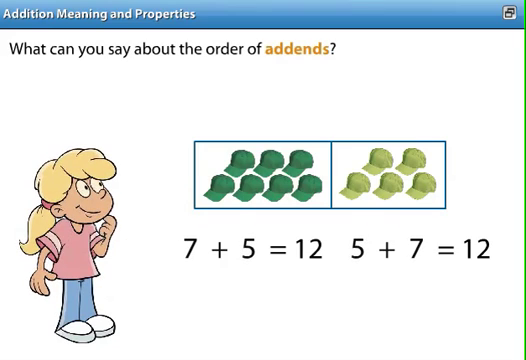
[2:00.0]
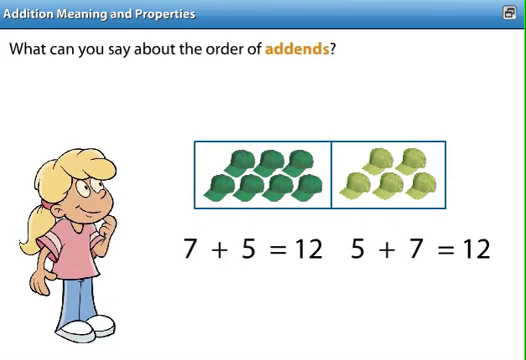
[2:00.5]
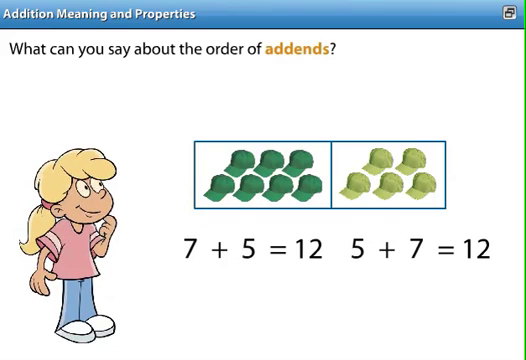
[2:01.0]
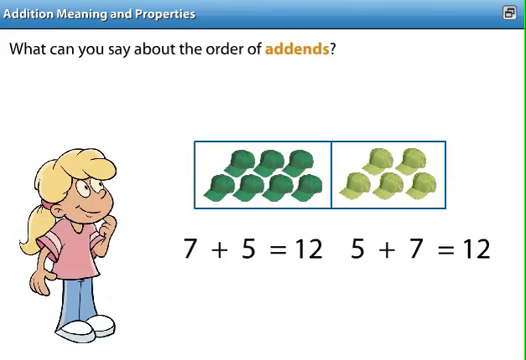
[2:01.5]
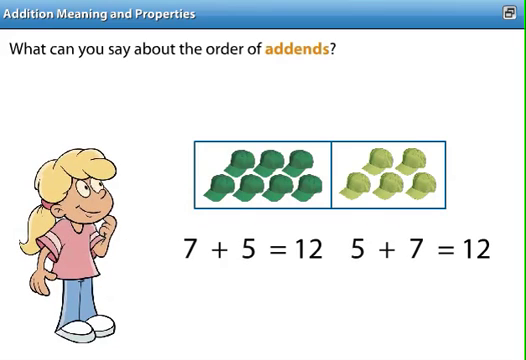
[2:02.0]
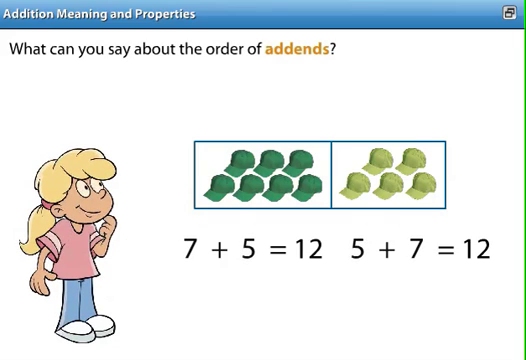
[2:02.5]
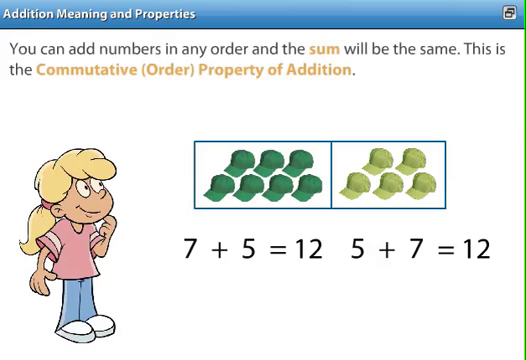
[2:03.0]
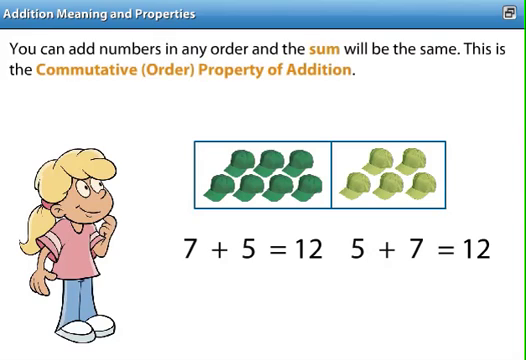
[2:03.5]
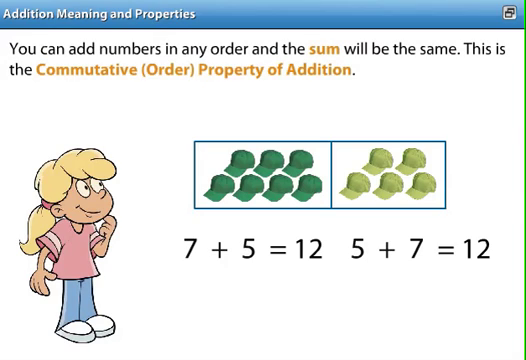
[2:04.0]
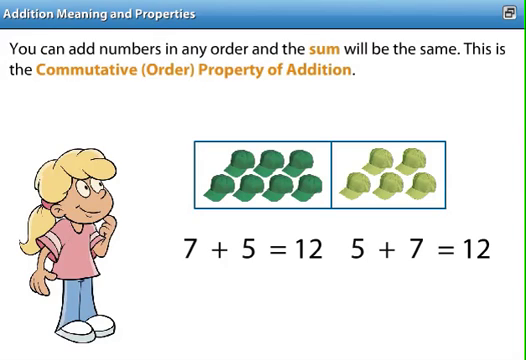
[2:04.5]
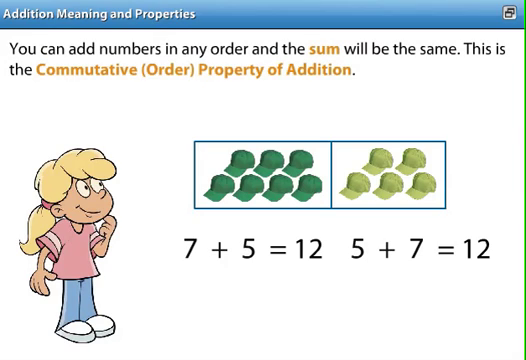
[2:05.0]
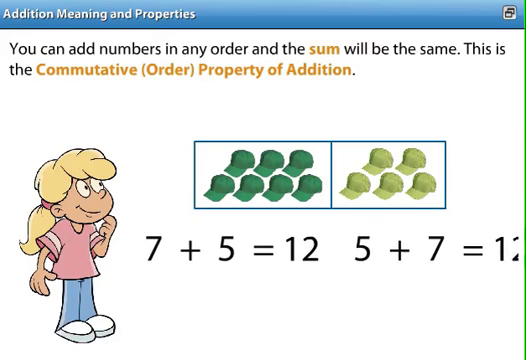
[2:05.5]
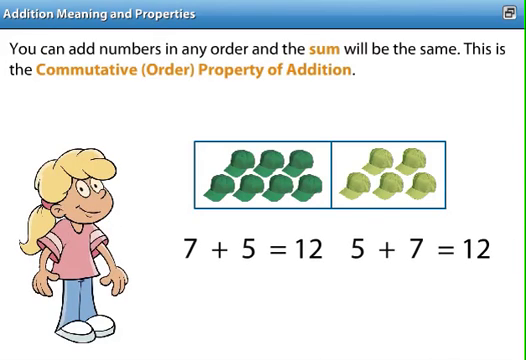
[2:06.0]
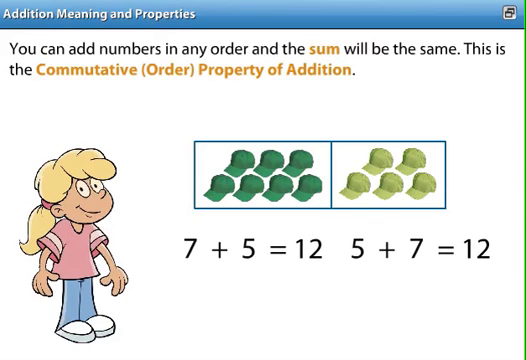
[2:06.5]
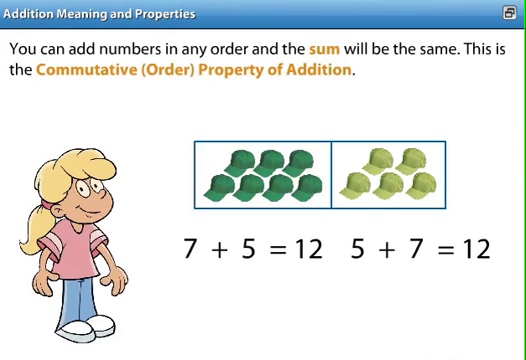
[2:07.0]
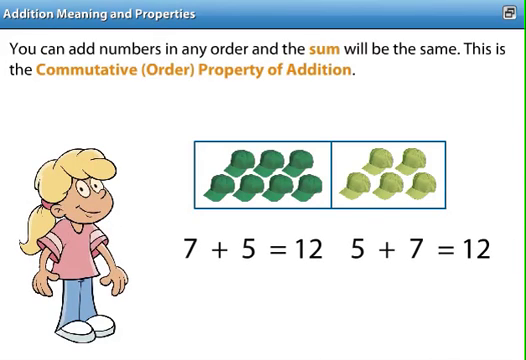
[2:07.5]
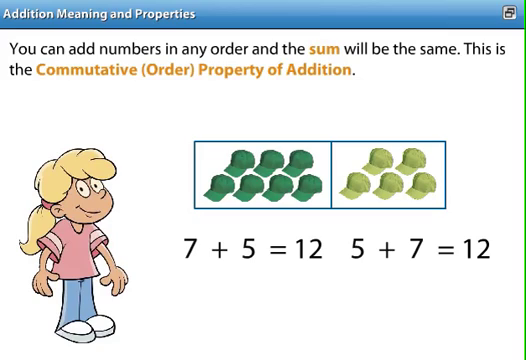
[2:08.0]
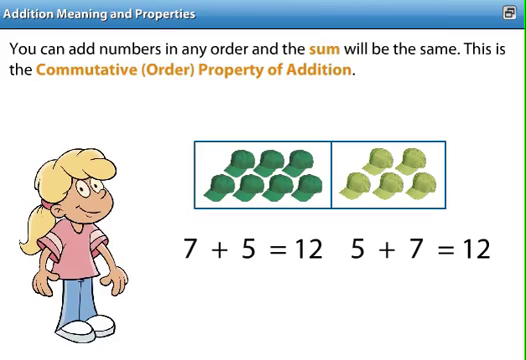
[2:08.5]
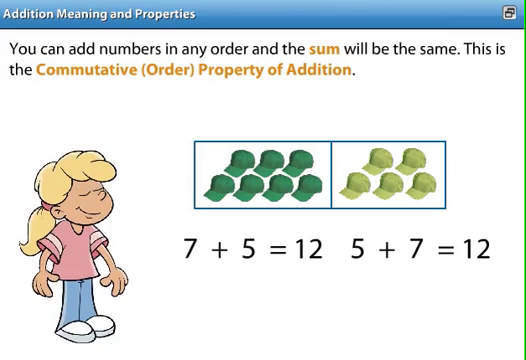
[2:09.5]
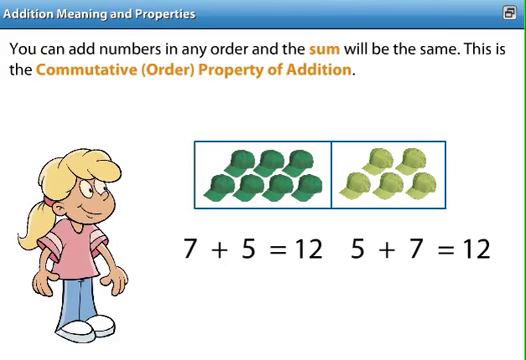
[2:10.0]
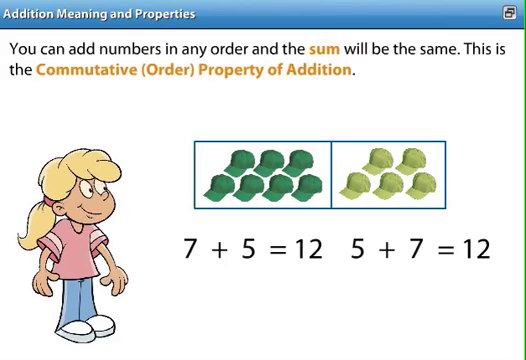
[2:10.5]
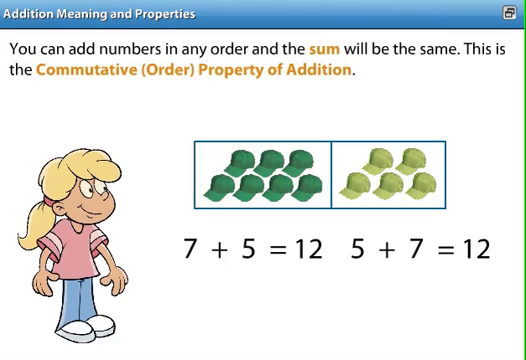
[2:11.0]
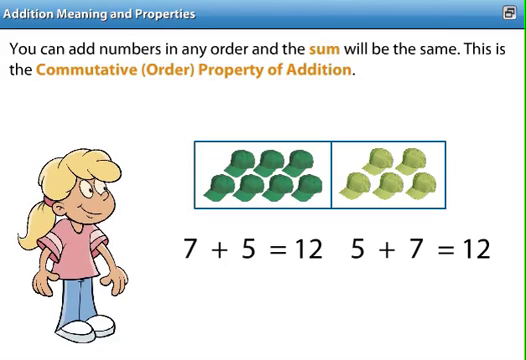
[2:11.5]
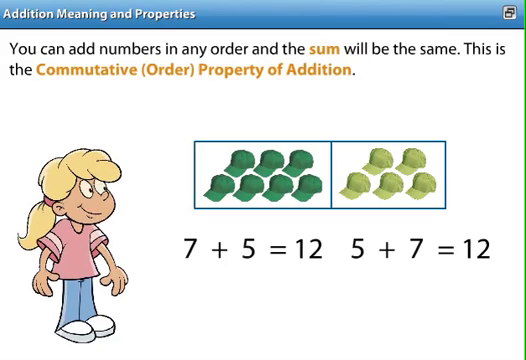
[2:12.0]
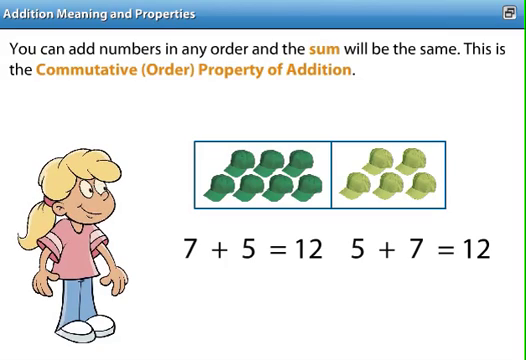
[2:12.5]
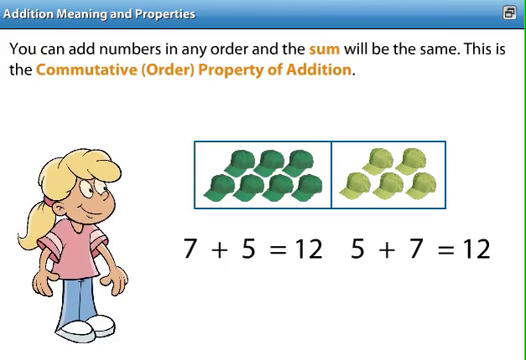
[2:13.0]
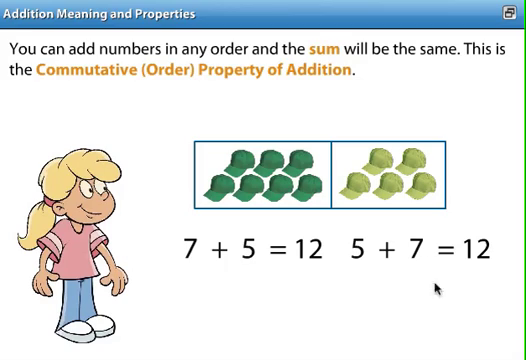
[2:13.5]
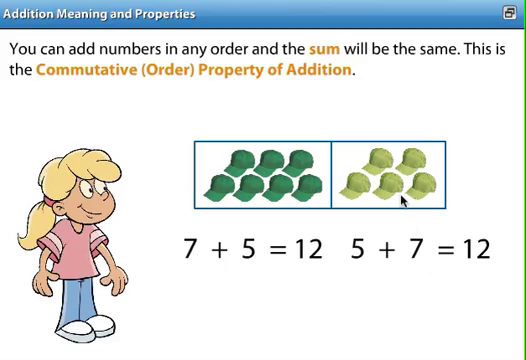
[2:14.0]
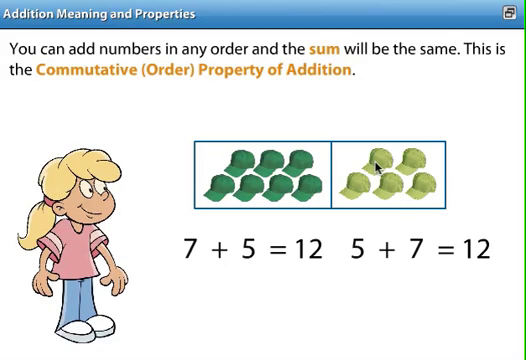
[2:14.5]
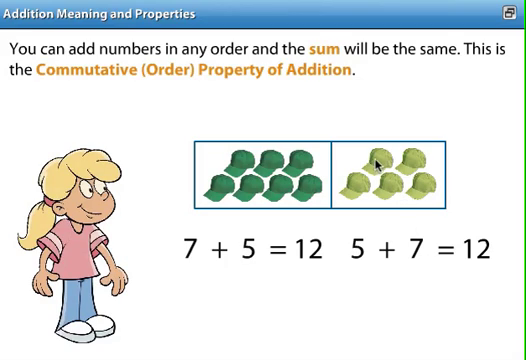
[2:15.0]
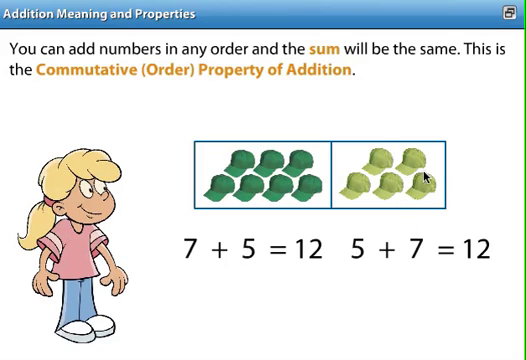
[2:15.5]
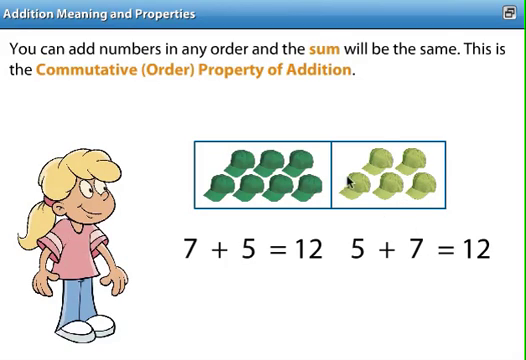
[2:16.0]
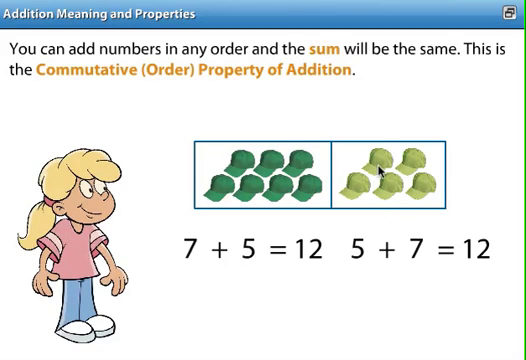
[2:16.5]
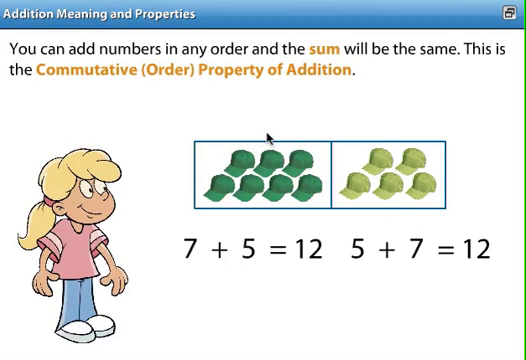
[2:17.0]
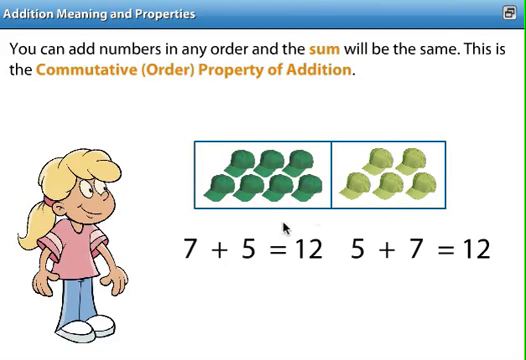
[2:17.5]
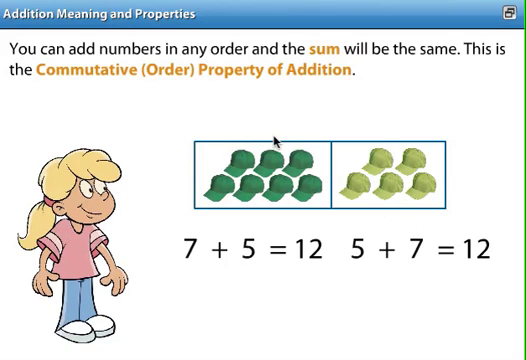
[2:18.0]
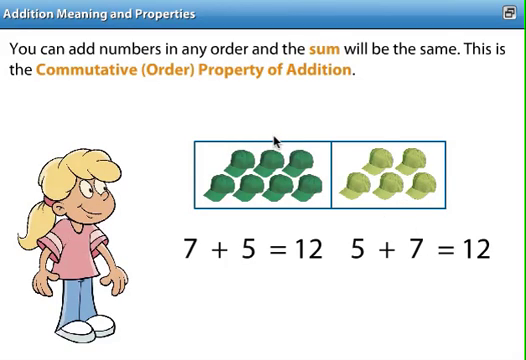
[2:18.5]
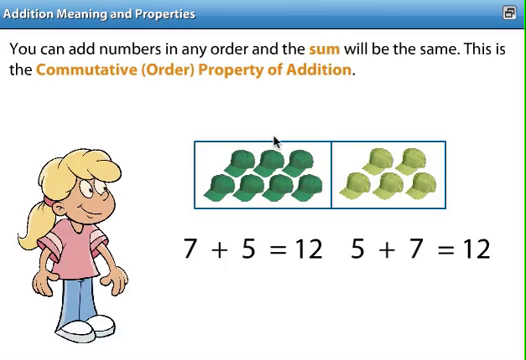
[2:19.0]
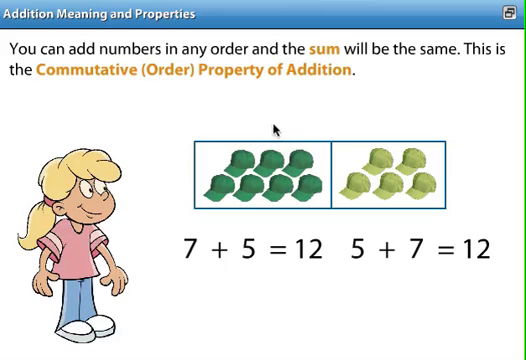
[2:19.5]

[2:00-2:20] The sentence at the top changes to read "you can add numbers in any order, and the sum will be the same. This is the commutative order property of addition," with "sum" and "commutative order property of addition" highlighted in yellow. The equations are emphasized by expanding and retracting. The mouse cursor moves around the differently colored hats in the rectangles. The top writing changes to read "you can add the numbers in any order, and the sum will be the same," emphasizing it one more time, and the cartoon character reacts with surprise, gasping and smiling. The equations are strongly emphasized, each number zooming in and out.